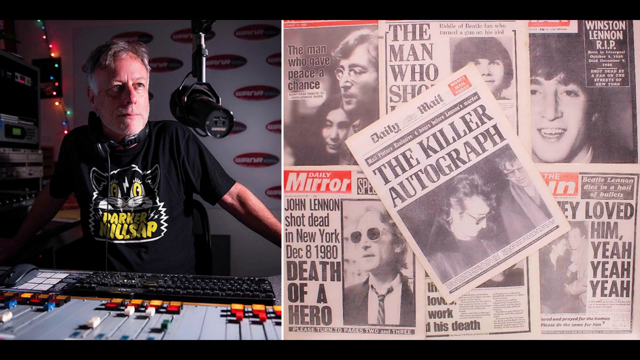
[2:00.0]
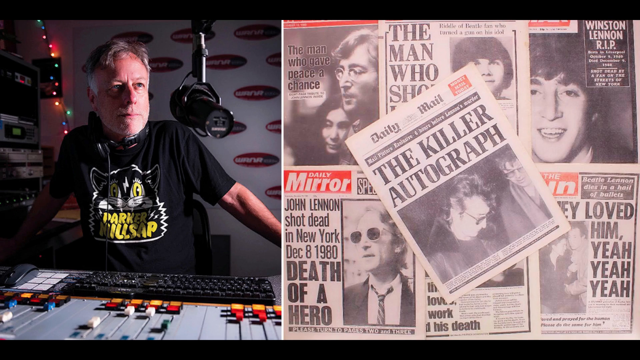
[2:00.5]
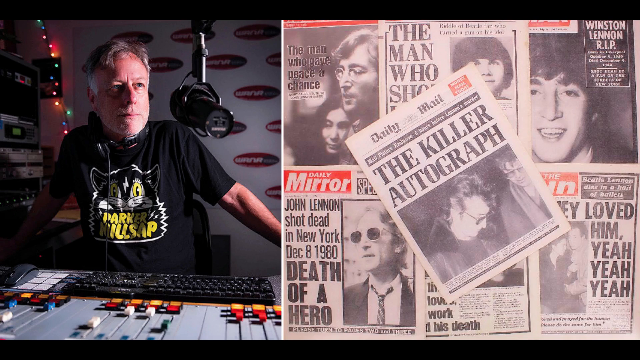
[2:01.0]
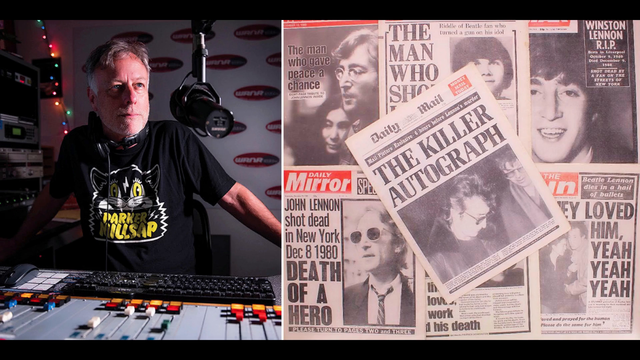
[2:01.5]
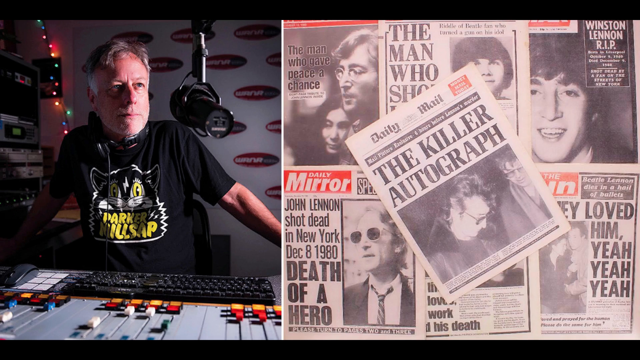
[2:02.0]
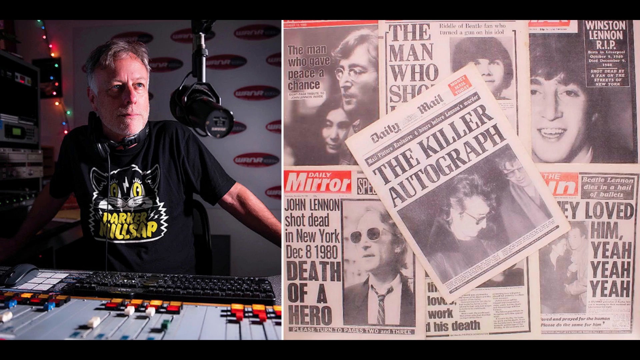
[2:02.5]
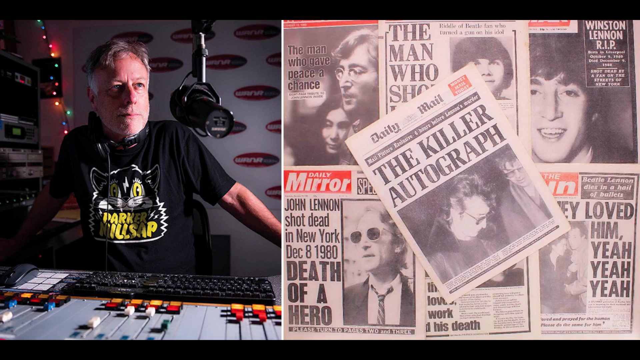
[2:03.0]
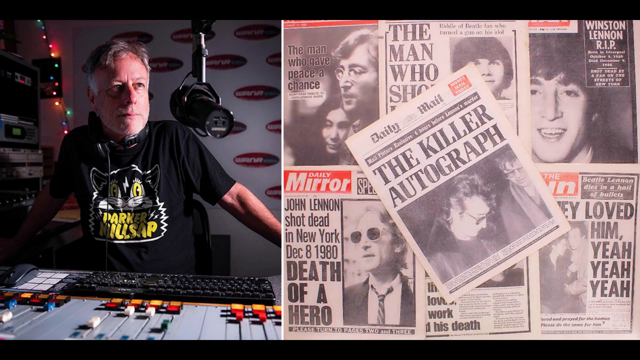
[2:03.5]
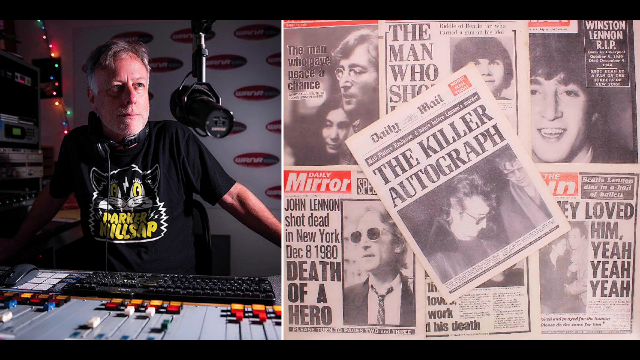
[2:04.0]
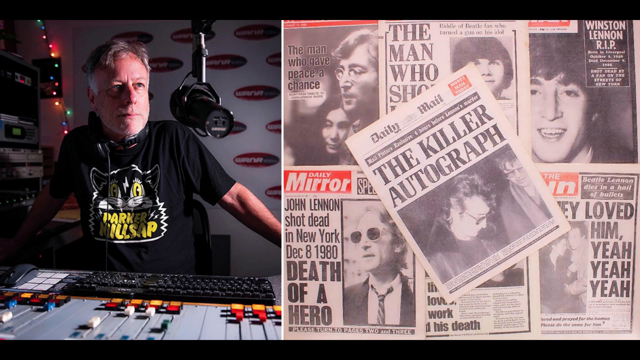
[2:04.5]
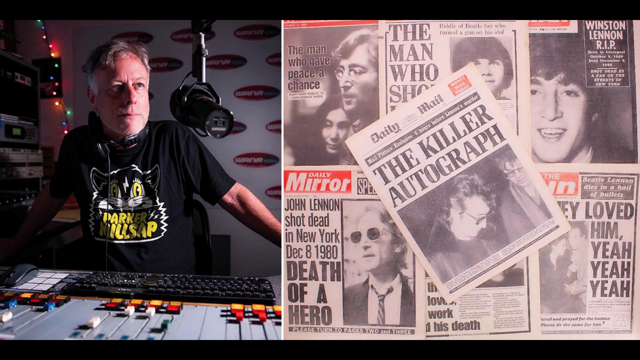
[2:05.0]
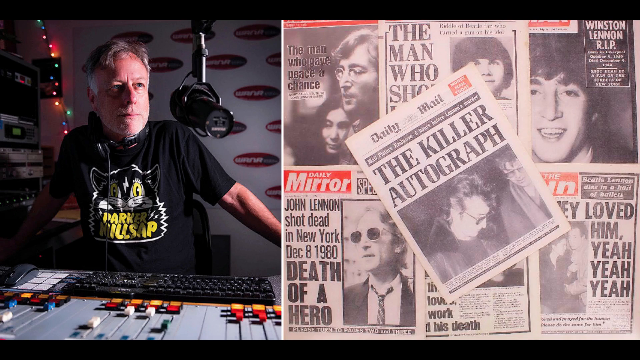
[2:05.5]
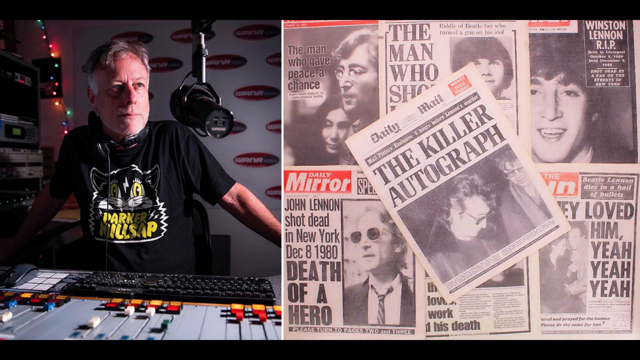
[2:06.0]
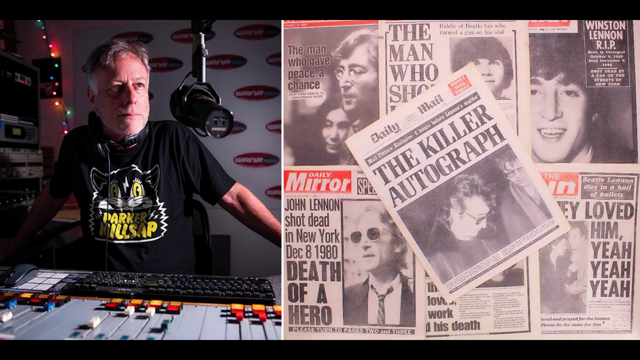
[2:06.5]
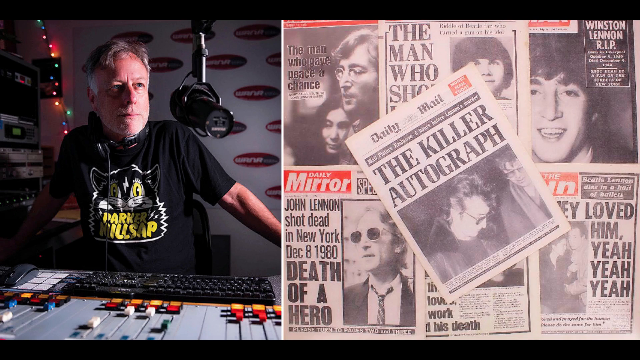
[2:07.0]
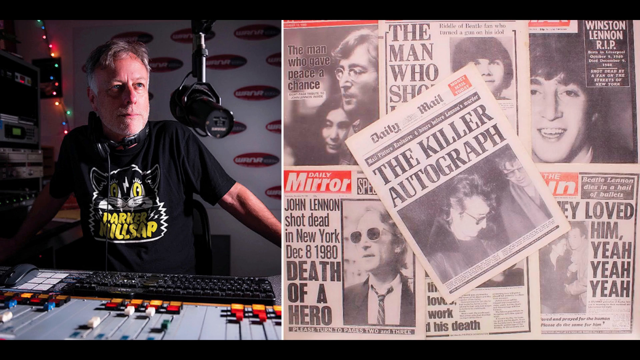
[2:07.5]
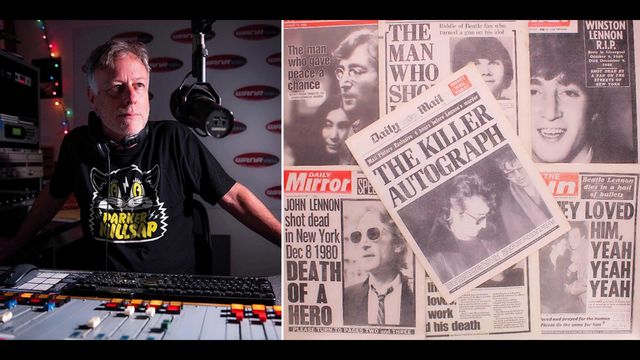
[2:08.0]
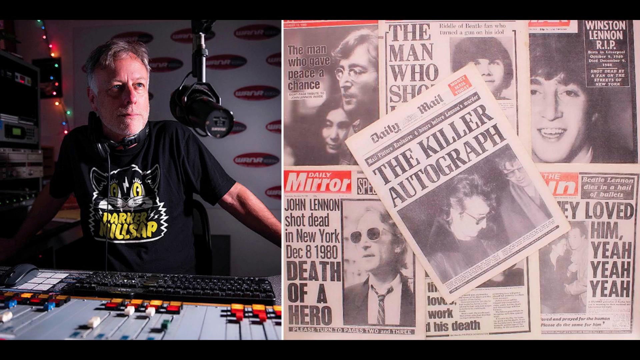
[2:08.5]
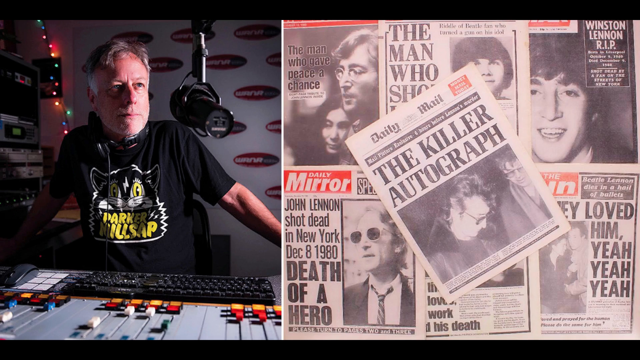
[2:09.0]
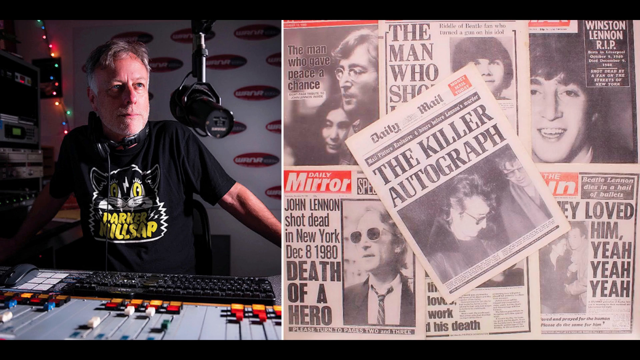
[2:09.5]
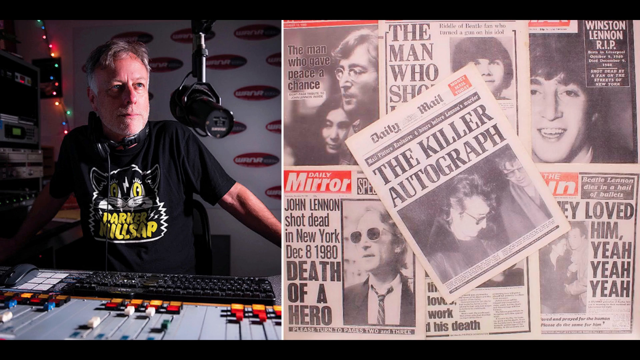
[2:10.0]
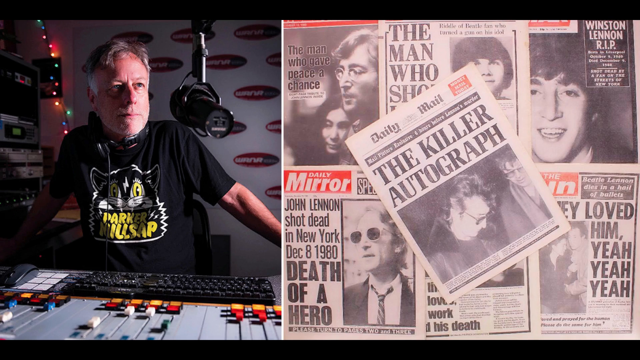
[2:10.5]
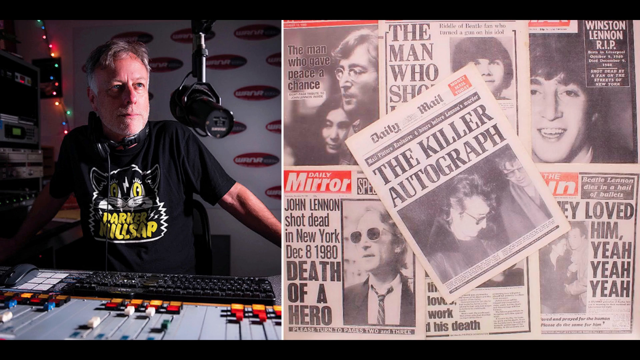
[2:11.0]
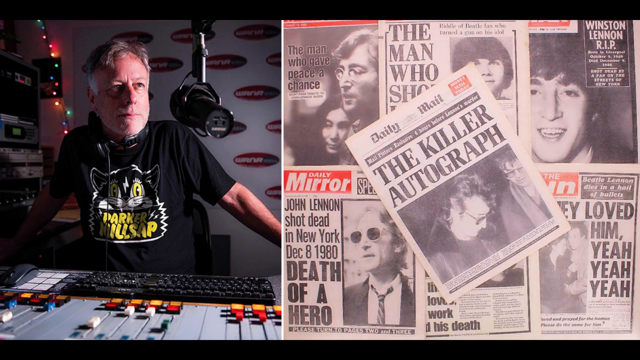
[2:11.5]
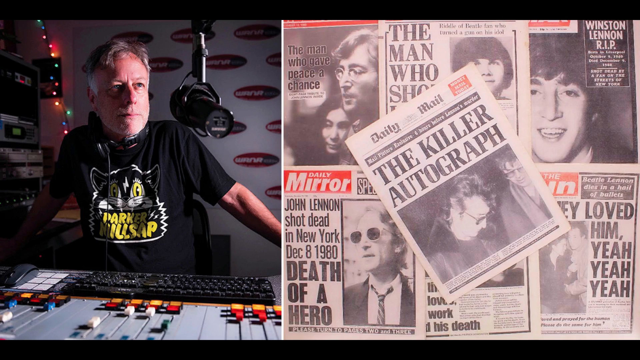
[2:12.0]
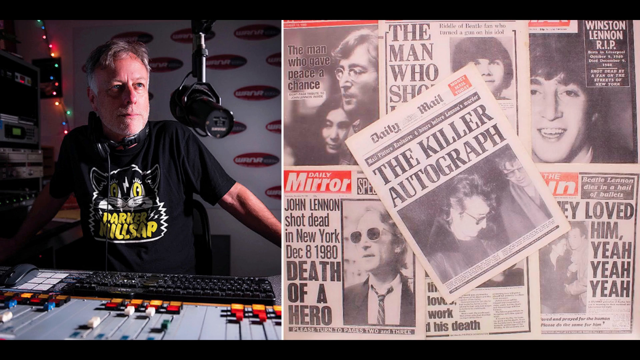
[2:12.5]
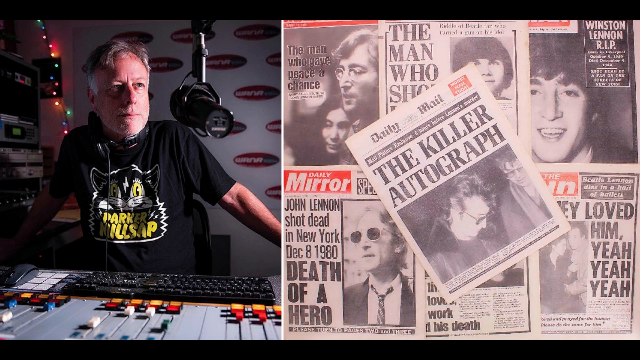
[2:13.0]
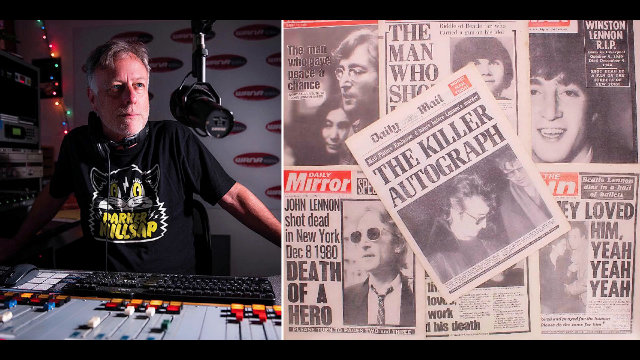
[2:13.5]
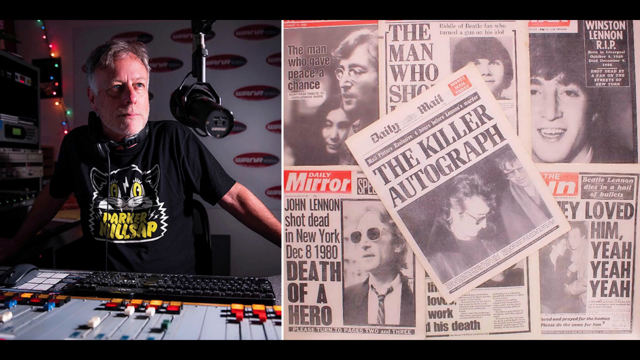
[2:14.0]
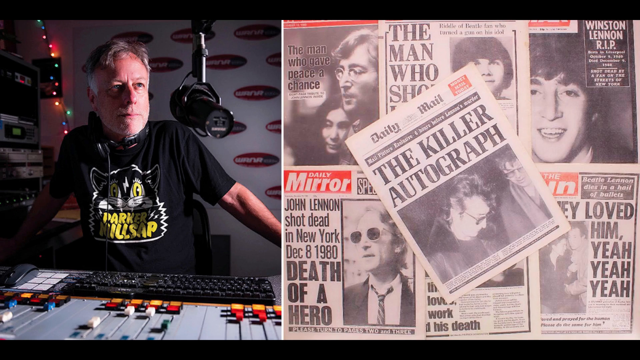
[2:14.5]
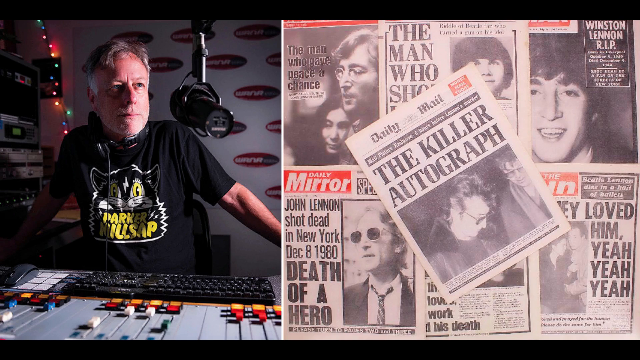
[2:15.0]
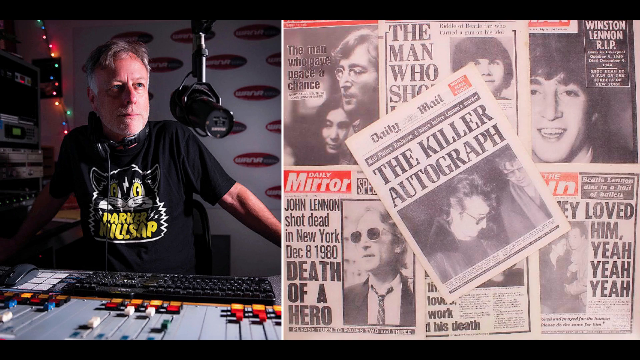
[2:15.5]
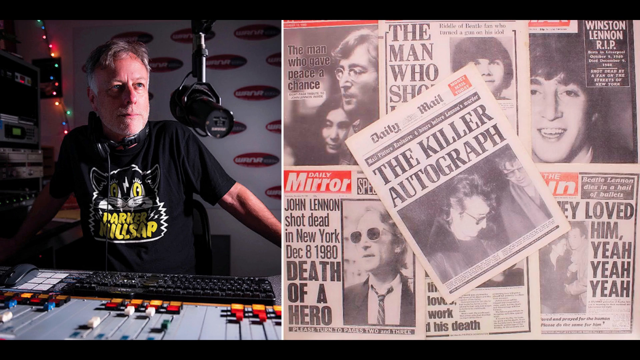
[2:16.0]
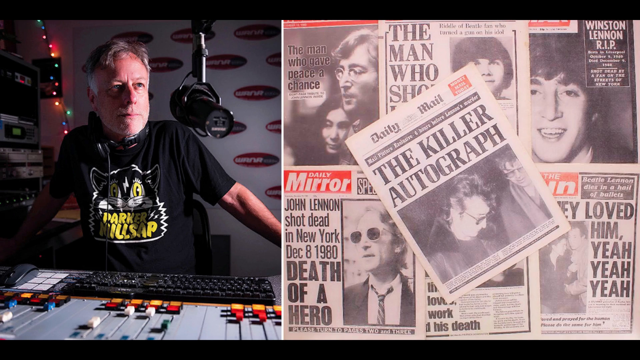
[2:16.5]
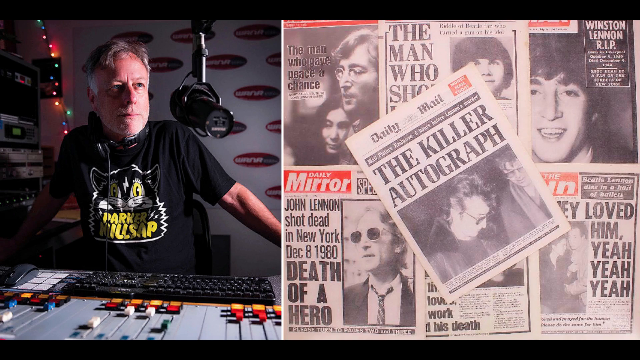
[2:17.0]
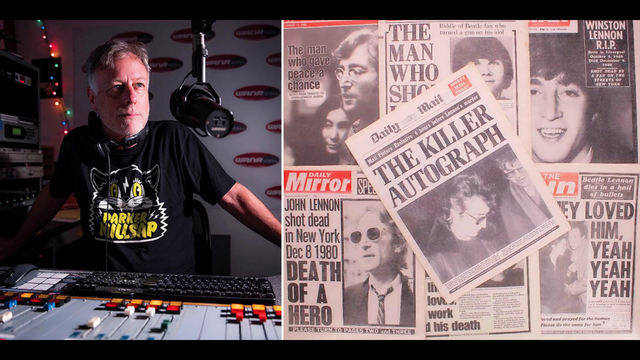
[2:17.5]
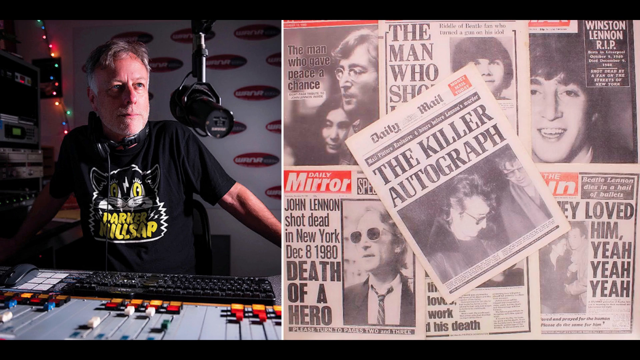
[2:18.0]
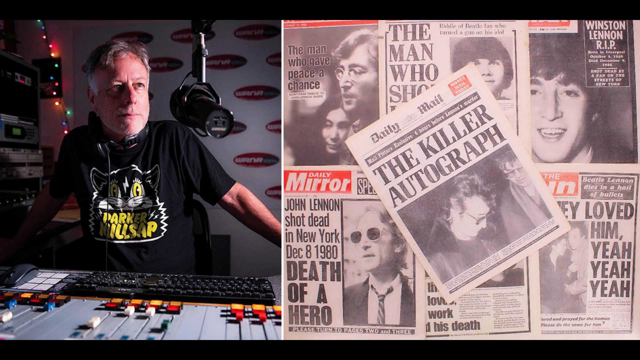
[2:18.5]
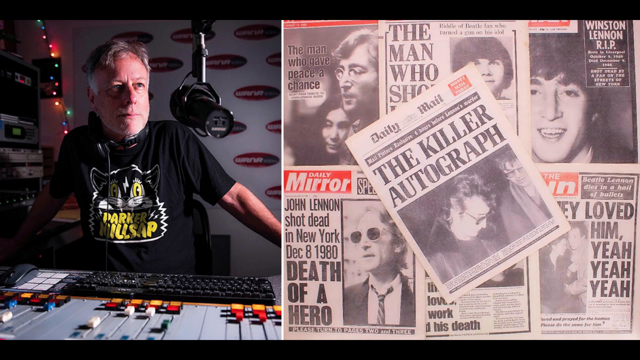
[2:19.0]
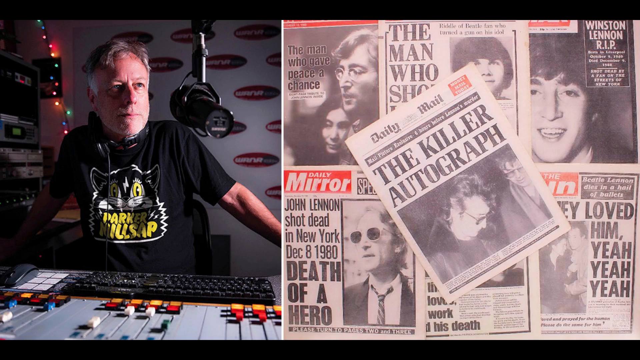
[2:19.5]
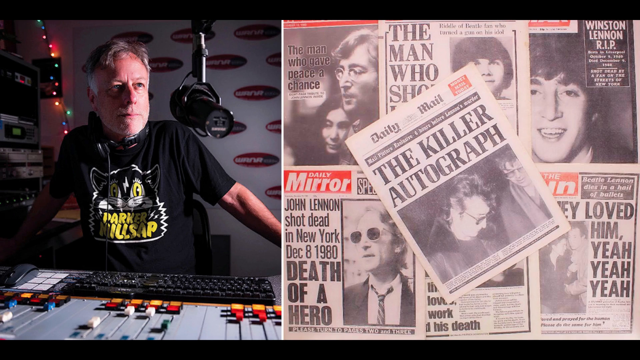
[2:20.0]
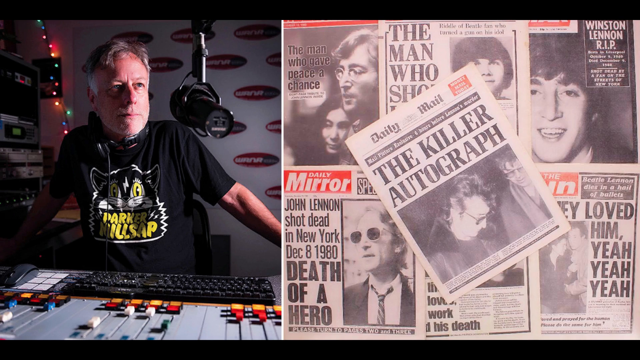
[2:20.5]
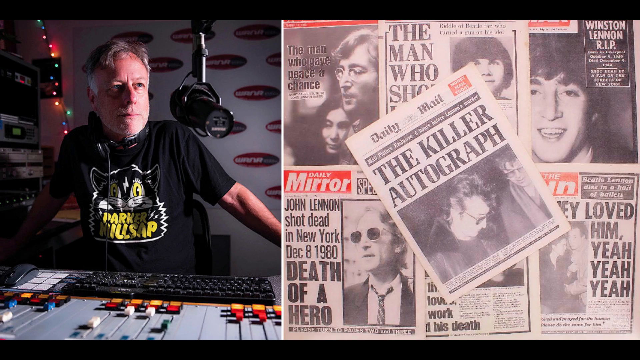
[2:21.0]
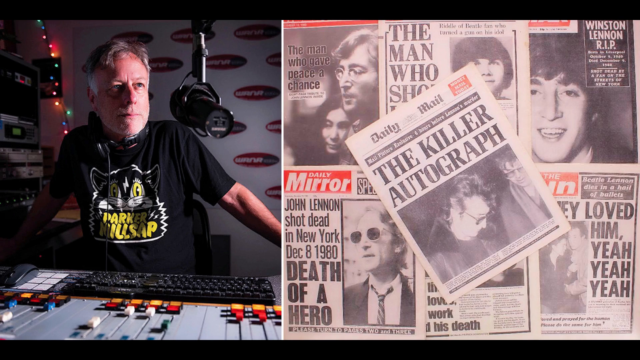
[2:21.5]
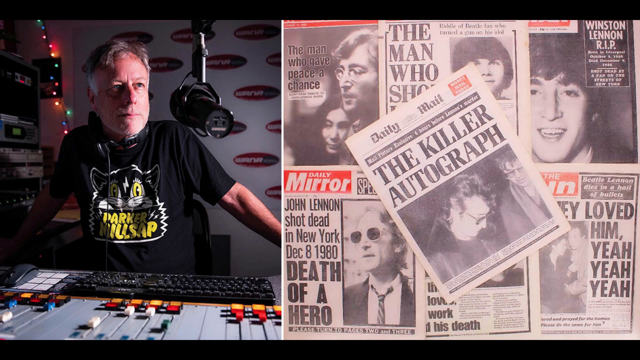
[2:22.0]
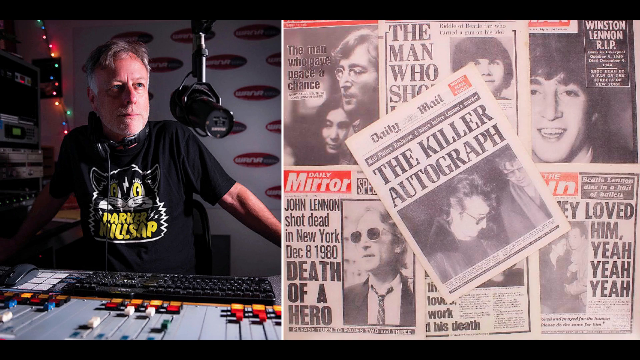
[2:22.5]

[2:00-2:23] The split-screen image continues, with the radio DJ on the left and newspaper clippings kind of arranged in a grid, with another newspaper resting on top at a slanted angle. On the center top paper, the top of the newspaper is cut off, so the publication cannot be seen, and some of the text is obscured. On the left side of this paper, large black text reads "the man who shot", presumably referring to who shot John Lennon. To the right is what looks like a young boy with almost a bob haircut, black and straight, covering his ears and most of his forehead. He is maybe wearing a light-colored shirt and has kind of a blank stare on his face. All of the clippings relate to the death of John Lennon.